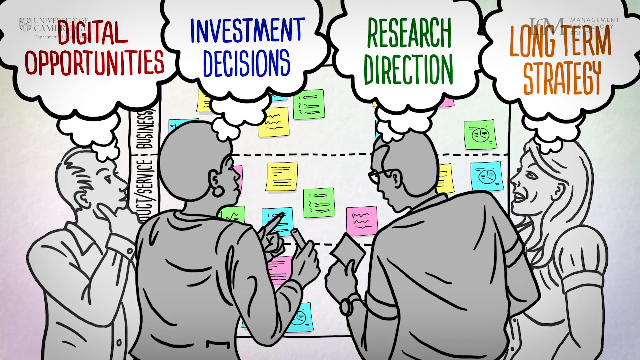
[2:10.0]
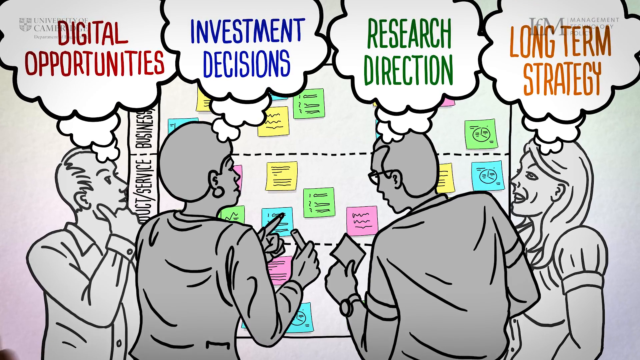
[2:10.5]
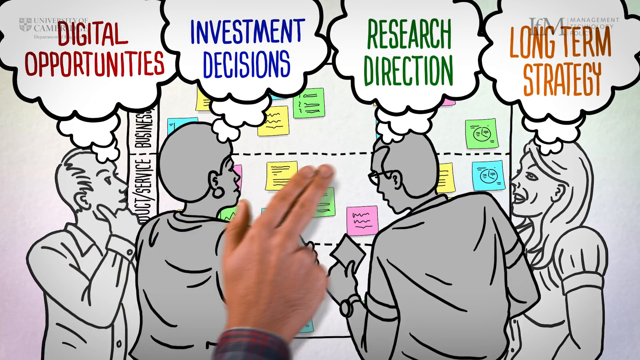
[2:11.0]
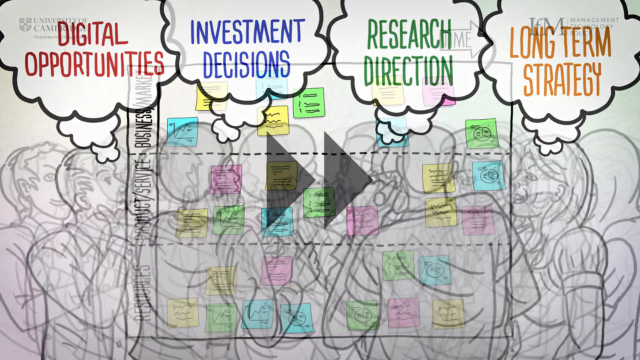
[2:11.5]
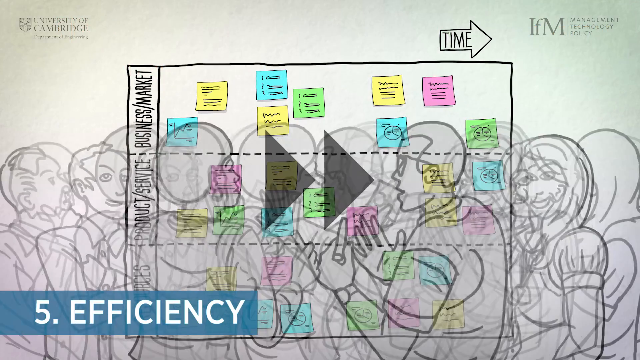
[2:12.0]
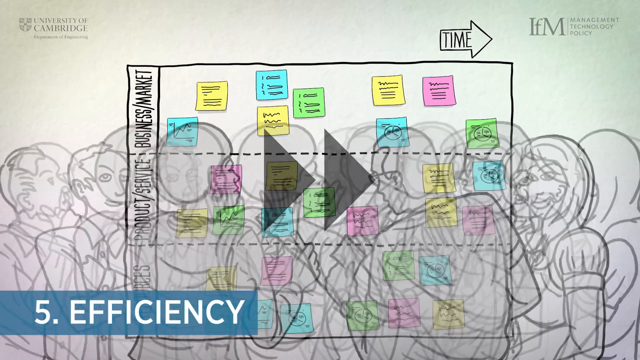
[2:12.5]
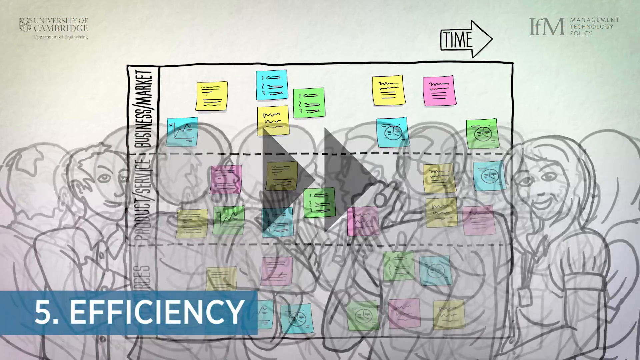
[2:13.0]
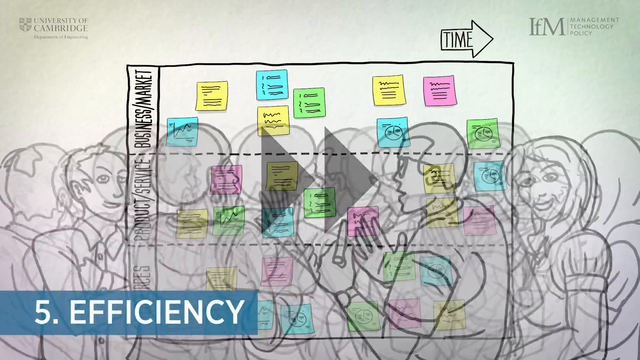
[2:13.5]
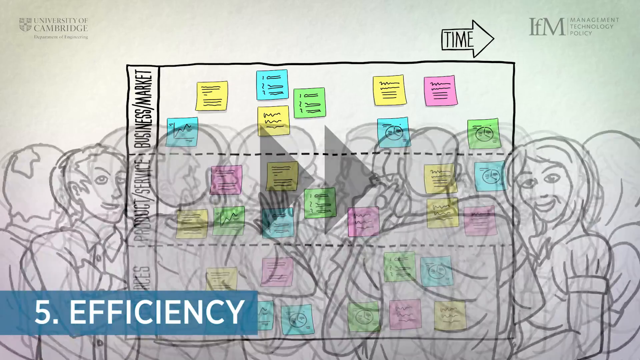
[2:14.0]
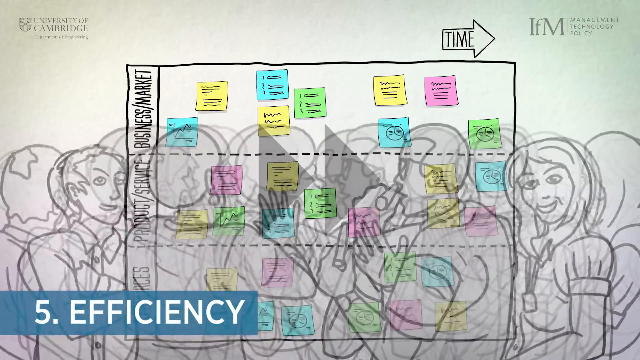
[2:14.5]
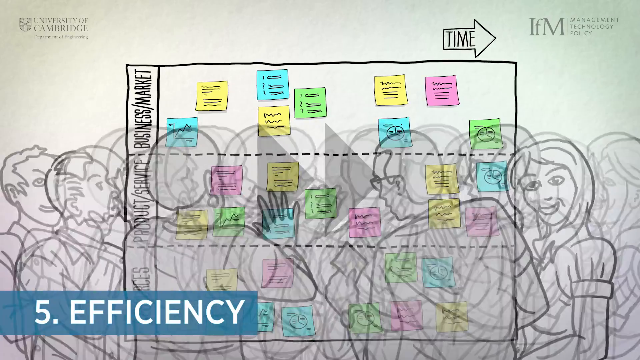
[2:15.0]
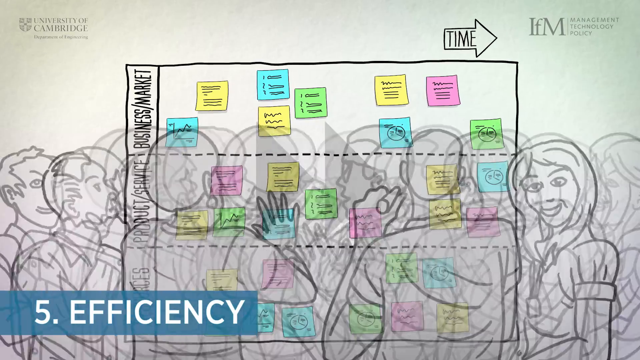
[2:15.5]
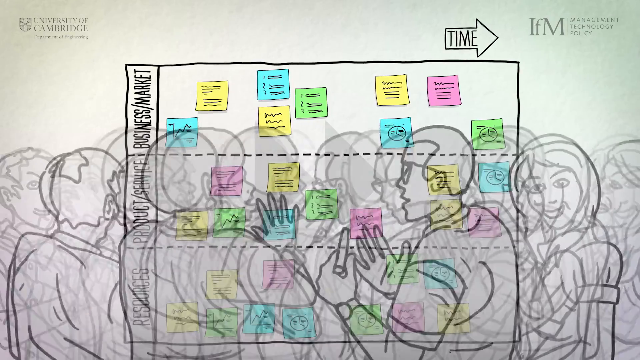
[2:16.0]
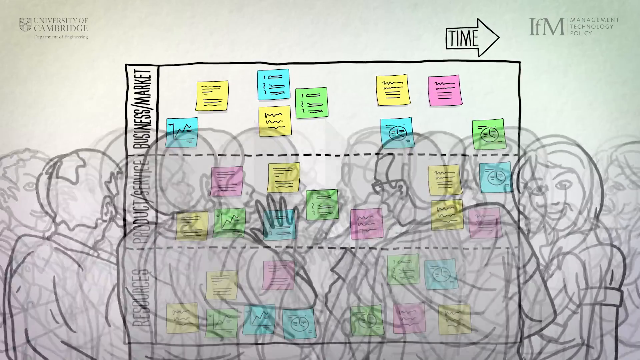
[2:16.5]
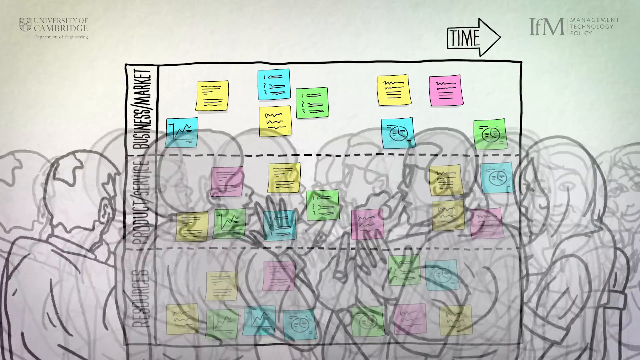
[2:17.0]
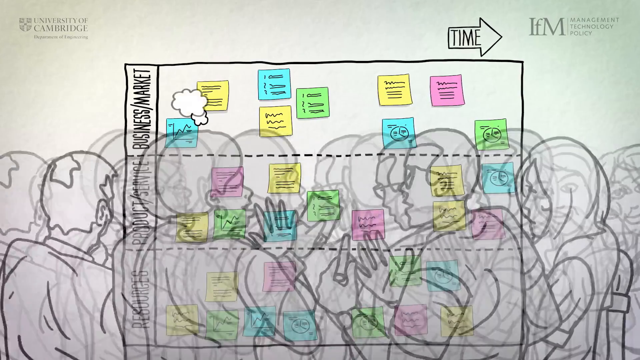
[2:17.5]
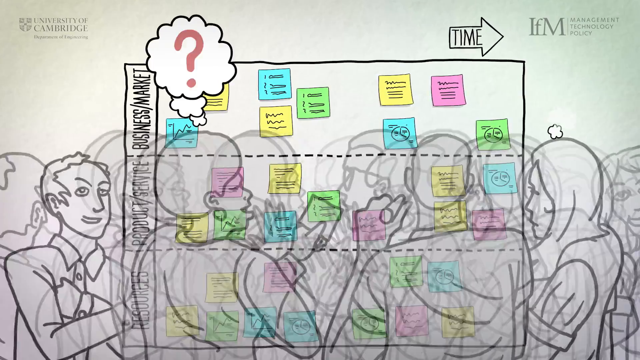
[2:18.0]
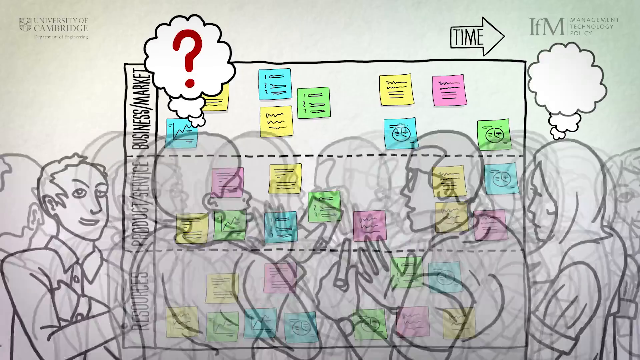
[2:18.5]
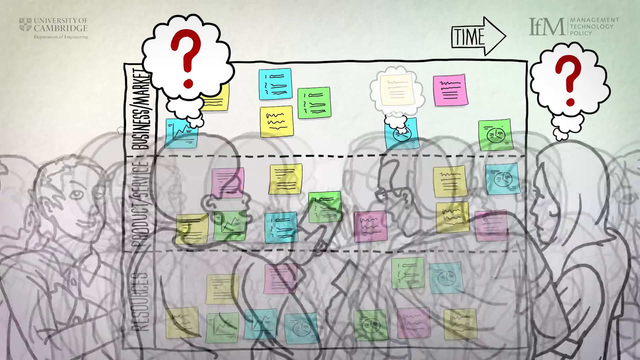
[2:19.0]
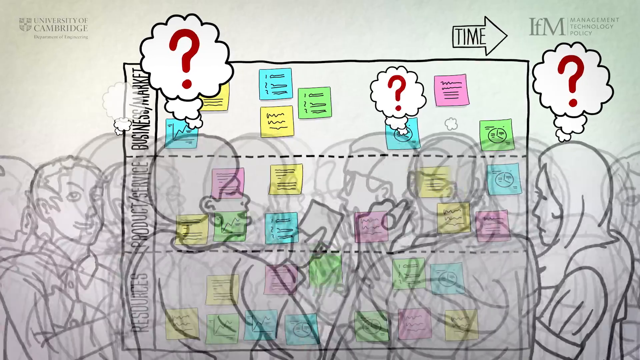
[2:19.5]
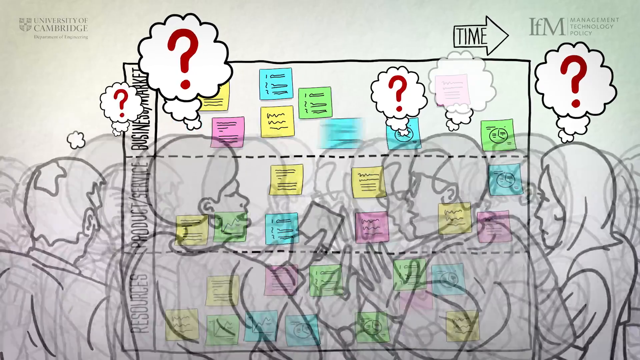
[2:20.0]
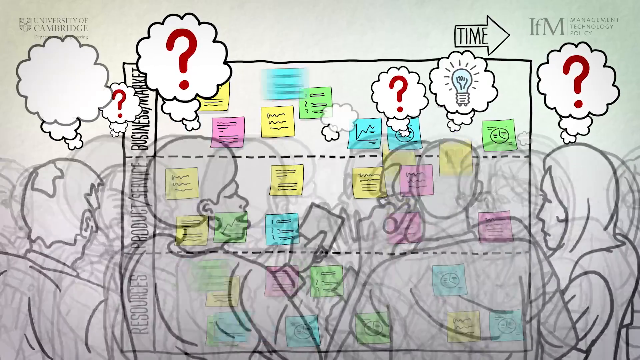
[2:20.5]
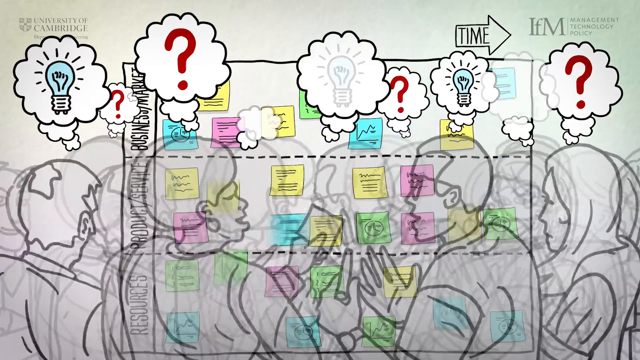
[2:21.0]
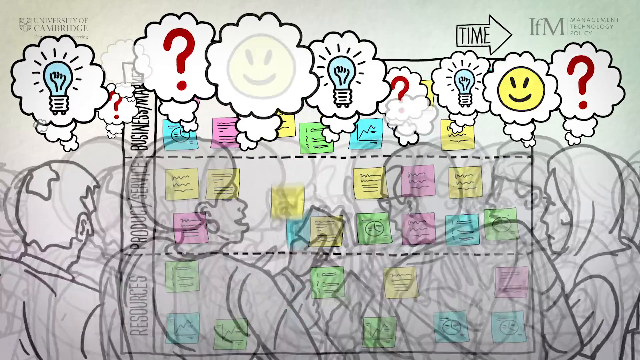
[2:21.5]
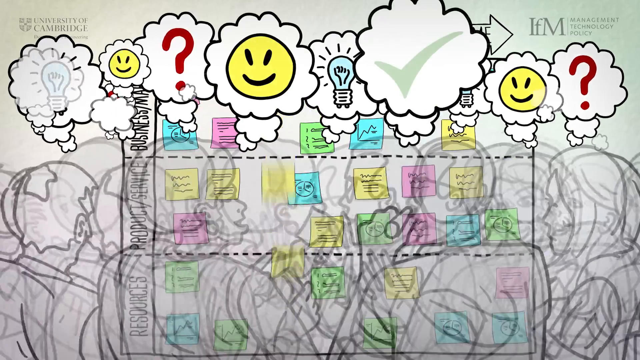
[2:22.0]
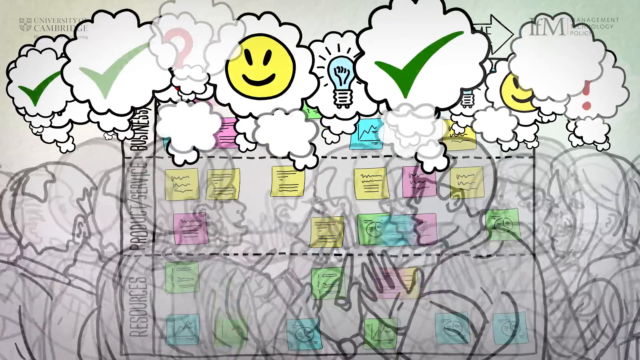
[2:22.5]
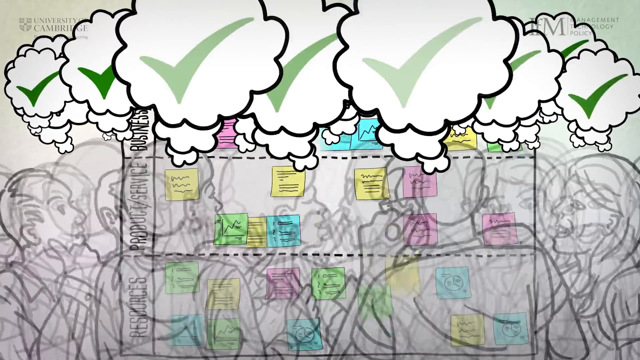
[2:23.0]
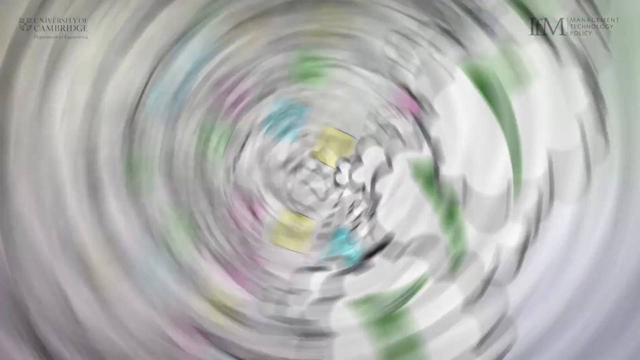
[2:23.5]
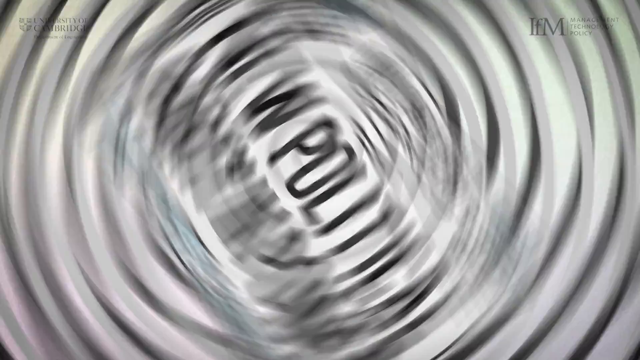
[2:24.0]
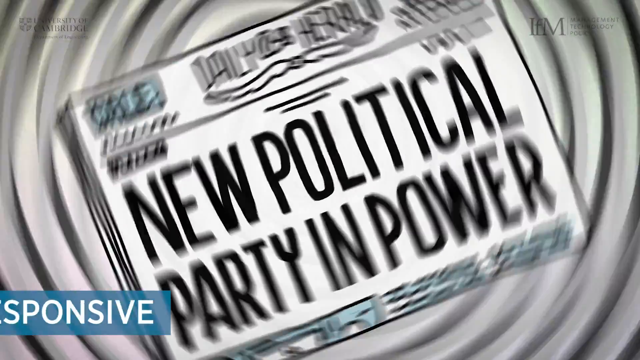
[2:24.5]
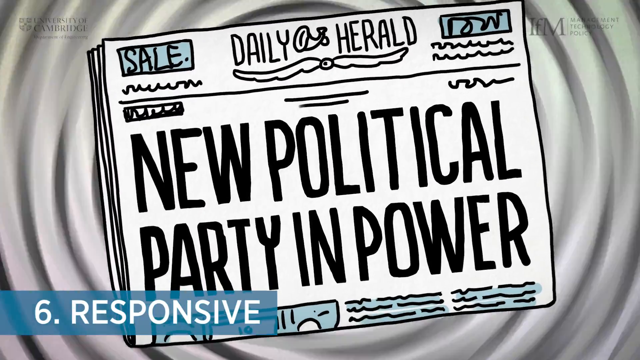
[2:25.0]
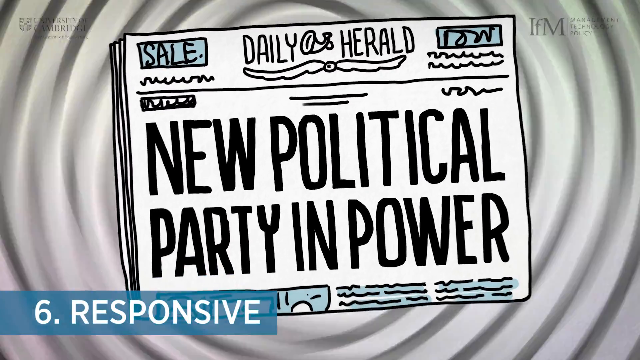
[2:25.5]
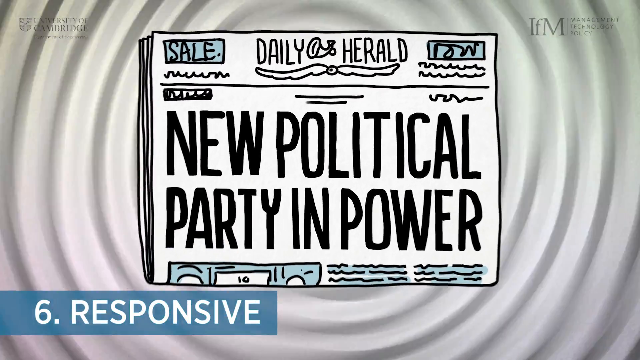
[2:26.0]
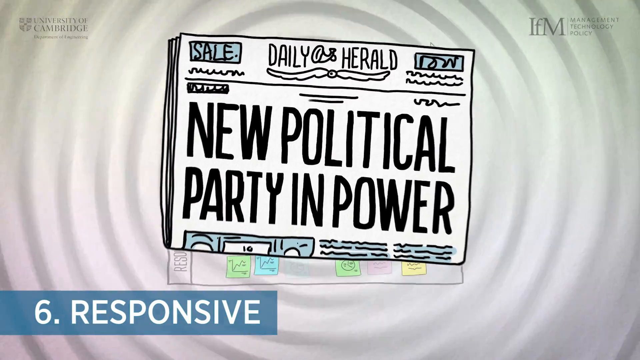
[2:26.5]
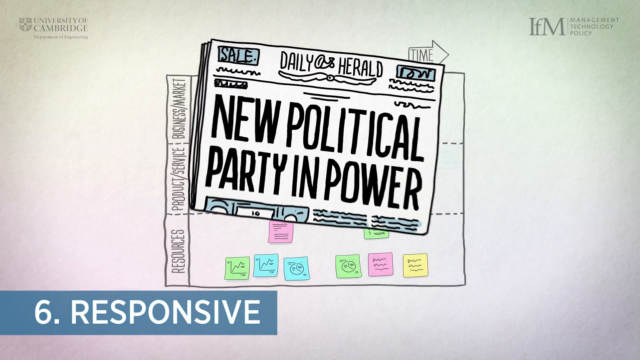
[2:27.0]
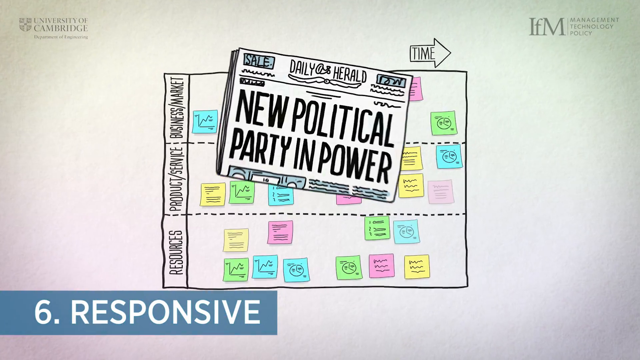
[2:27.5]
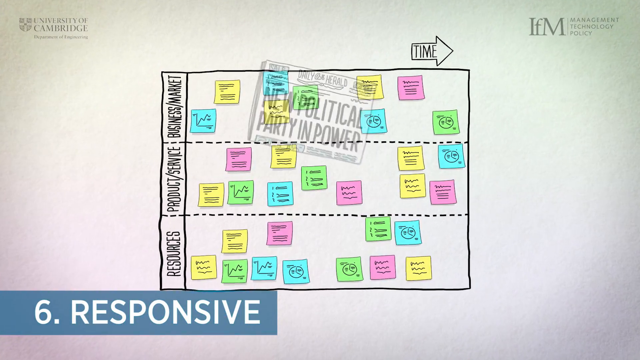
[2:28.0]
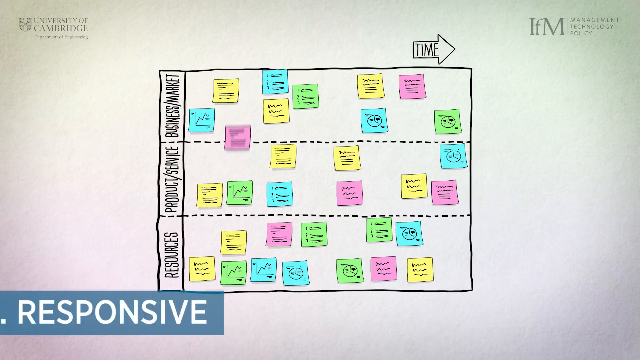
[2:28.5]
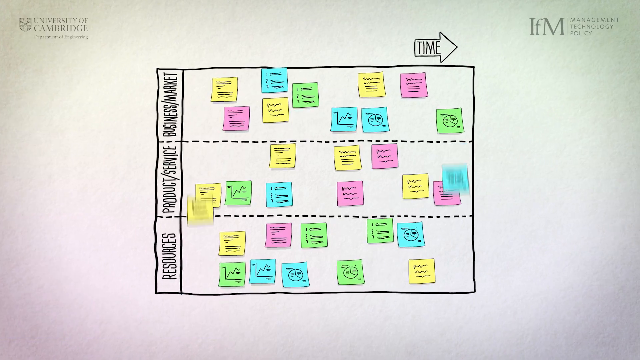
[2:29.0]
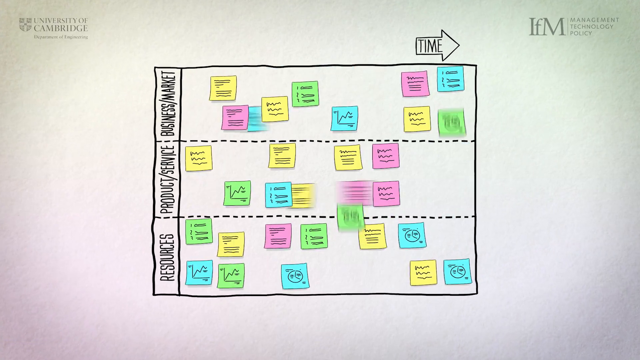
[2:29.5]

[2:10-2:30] Four cartoon people, two women and two men, are drawn only as black outlines. They stand around the collage of Post-it notes, which are all different colors and broken up into categories including business, product, and resources. The people are thinking, with thought bubbles above their heads: the man on the left is thinking about digital opportunities, the woman in the middle about investment decision, the man in the middle on the right about research decisions or directions, and the woman on the far right about long-term strategy. They all look at the board, holding pens, and some have notepads, analyzing the board.